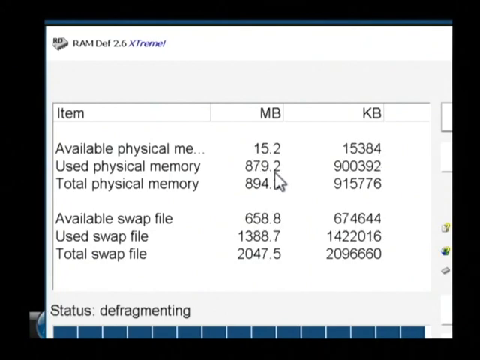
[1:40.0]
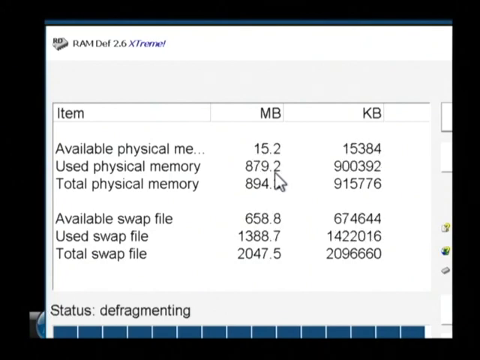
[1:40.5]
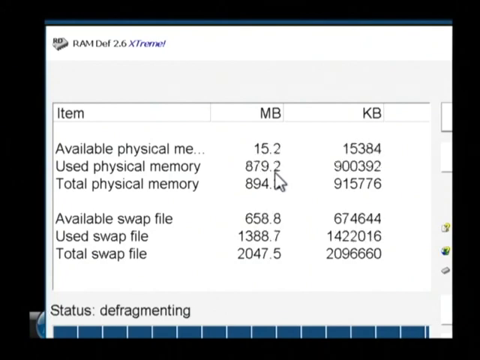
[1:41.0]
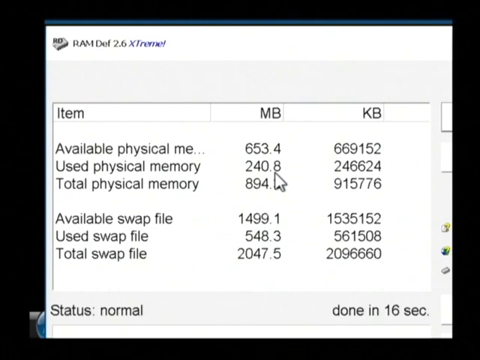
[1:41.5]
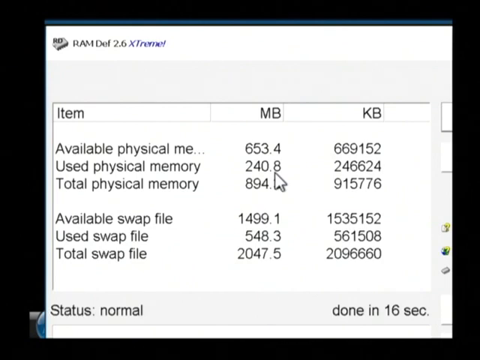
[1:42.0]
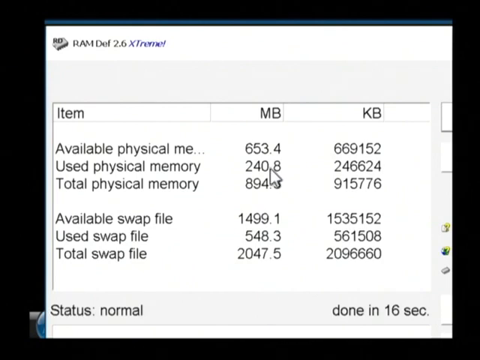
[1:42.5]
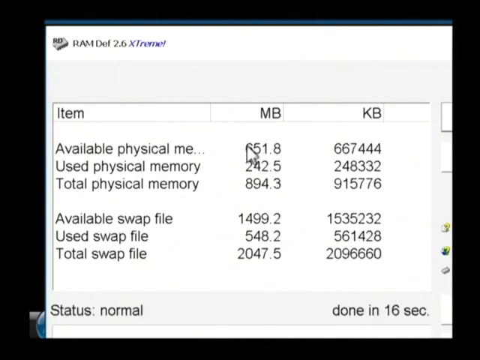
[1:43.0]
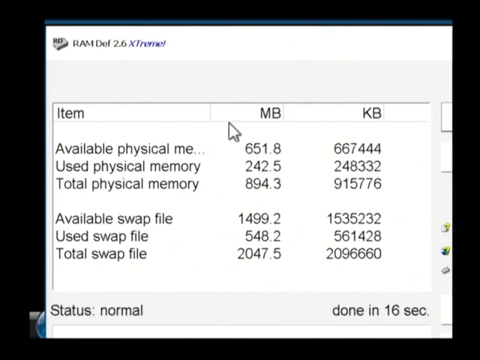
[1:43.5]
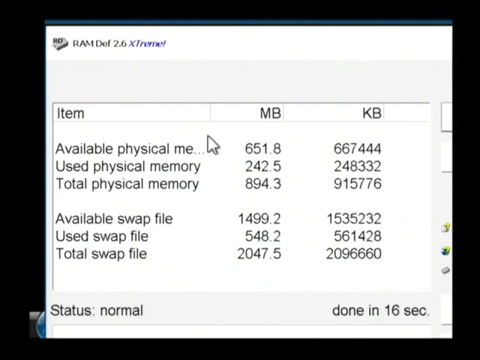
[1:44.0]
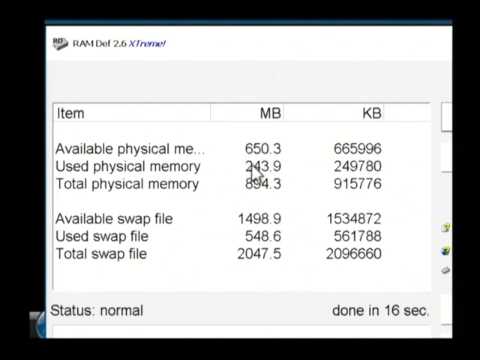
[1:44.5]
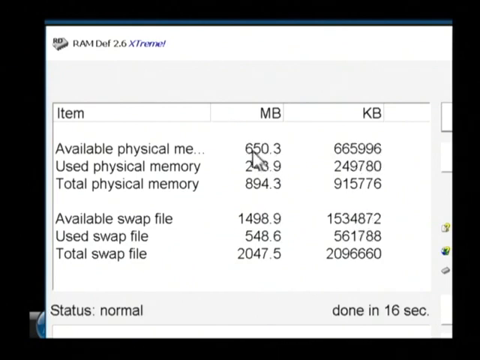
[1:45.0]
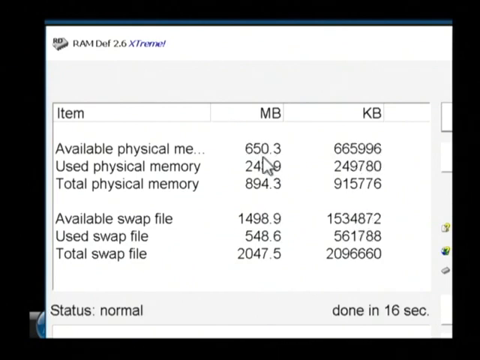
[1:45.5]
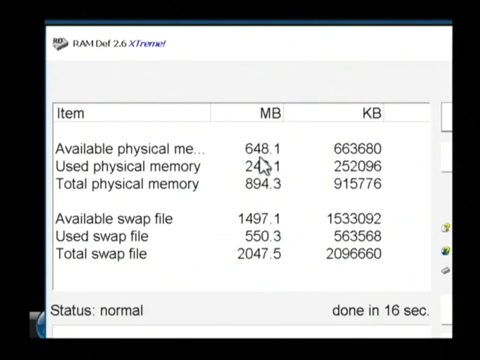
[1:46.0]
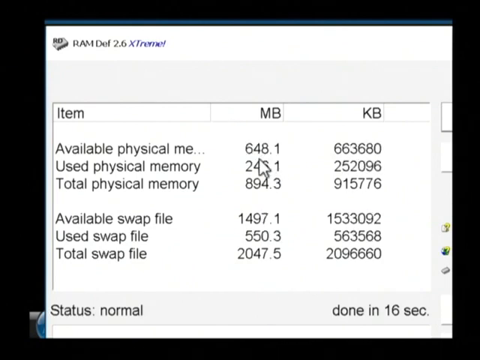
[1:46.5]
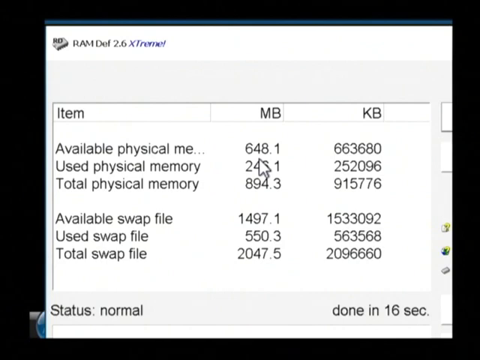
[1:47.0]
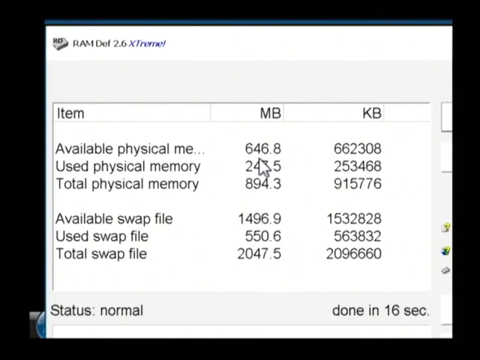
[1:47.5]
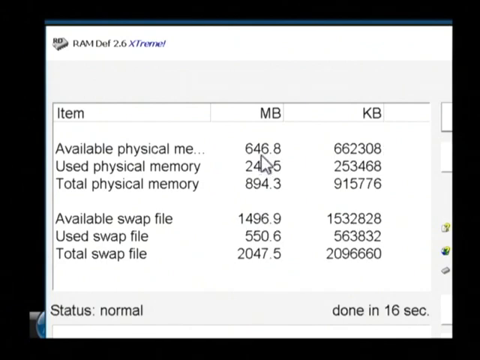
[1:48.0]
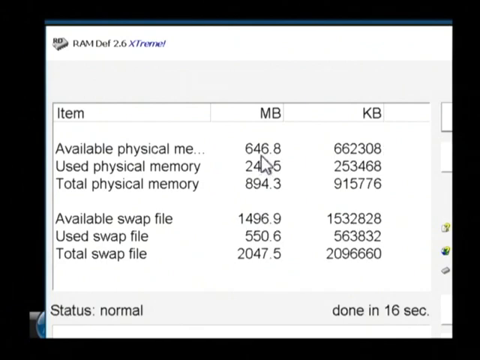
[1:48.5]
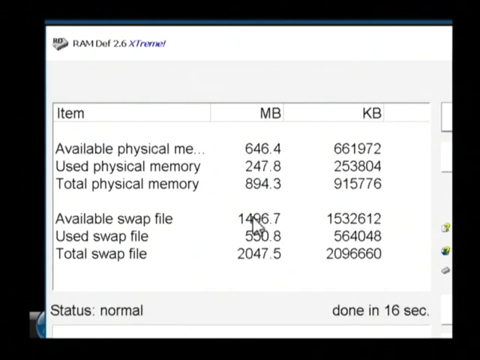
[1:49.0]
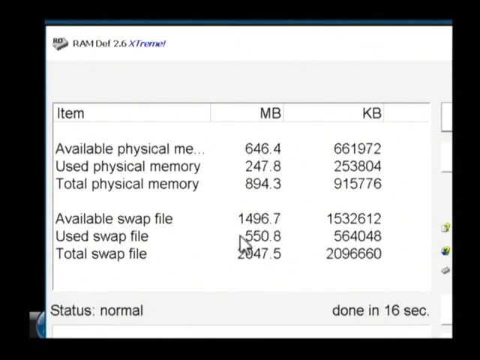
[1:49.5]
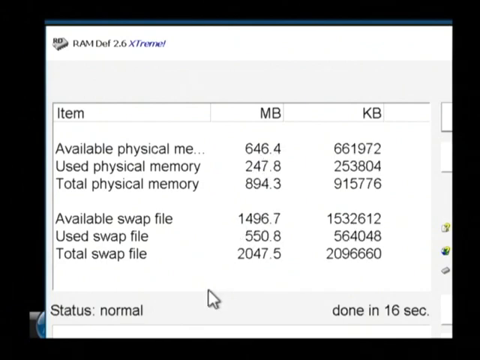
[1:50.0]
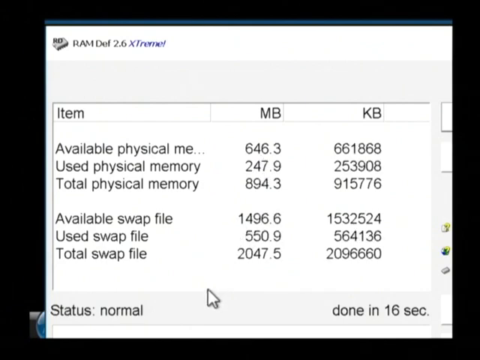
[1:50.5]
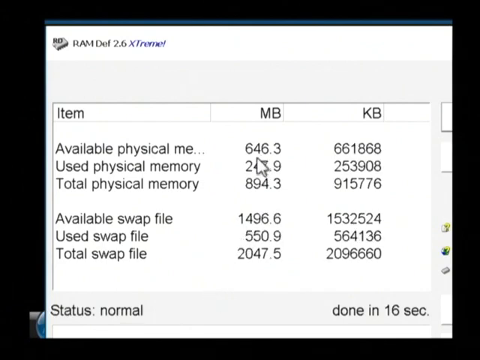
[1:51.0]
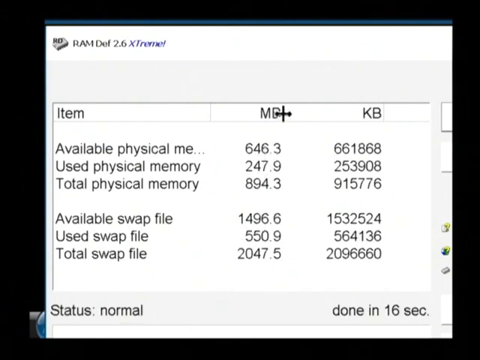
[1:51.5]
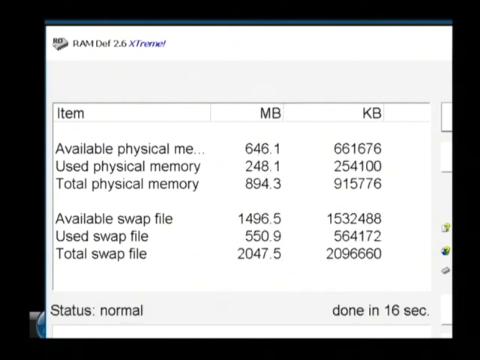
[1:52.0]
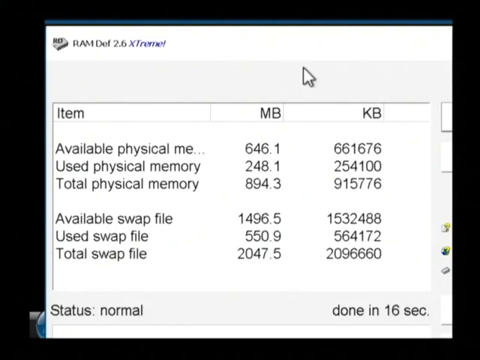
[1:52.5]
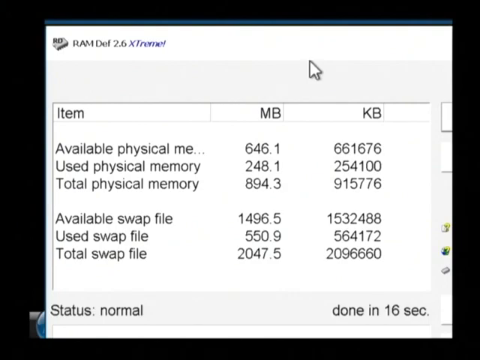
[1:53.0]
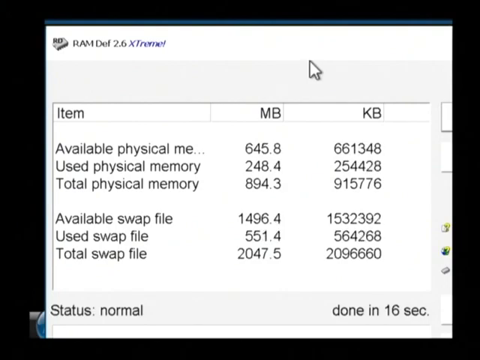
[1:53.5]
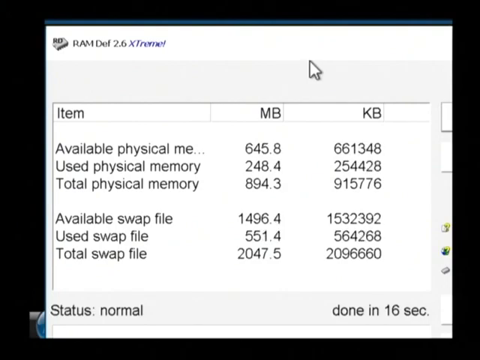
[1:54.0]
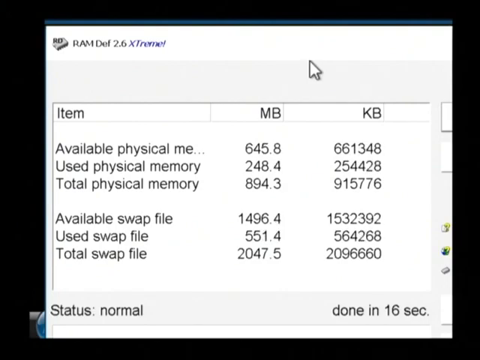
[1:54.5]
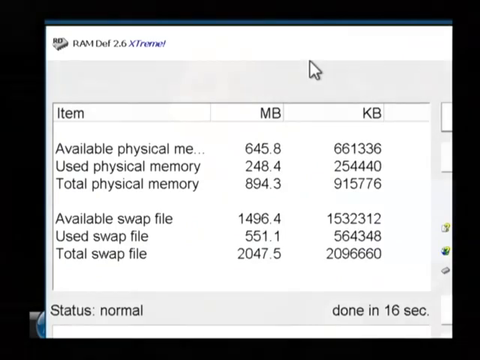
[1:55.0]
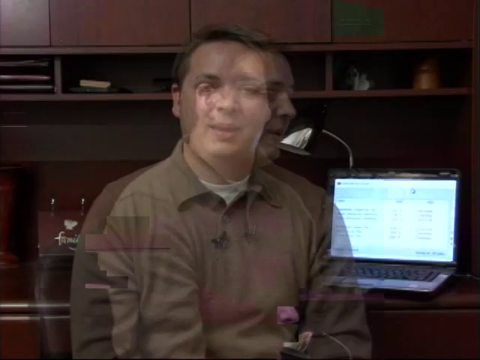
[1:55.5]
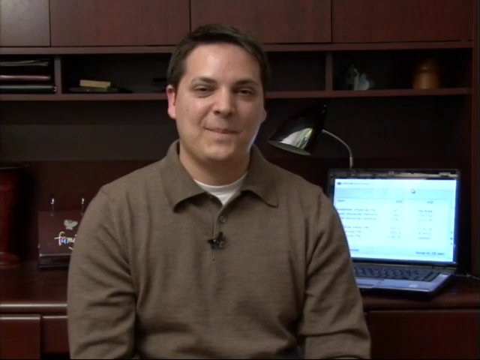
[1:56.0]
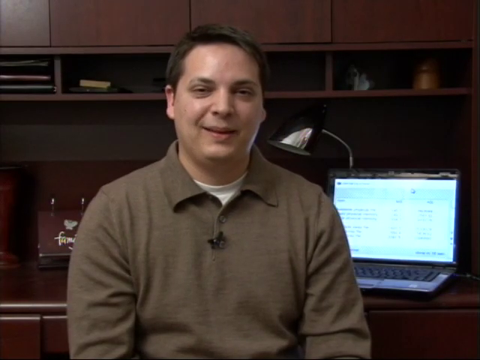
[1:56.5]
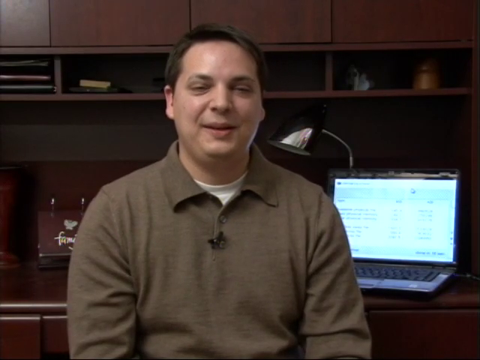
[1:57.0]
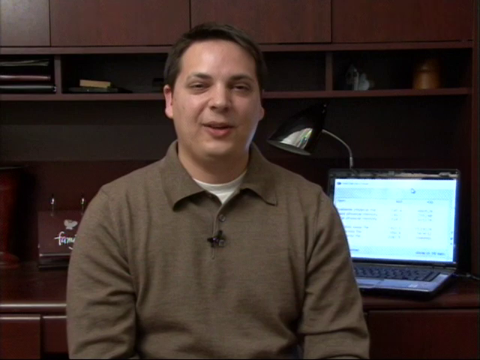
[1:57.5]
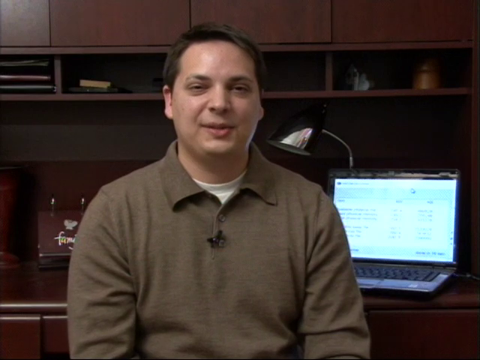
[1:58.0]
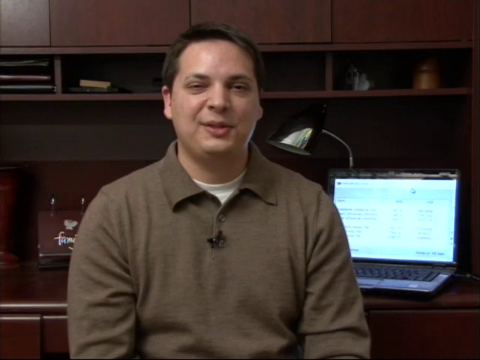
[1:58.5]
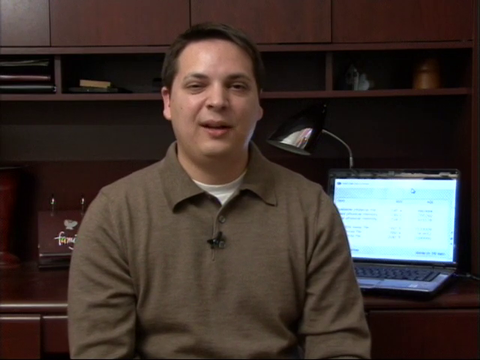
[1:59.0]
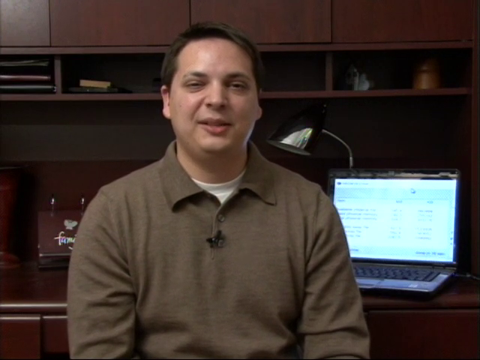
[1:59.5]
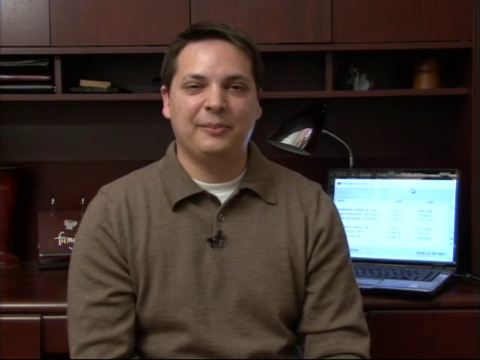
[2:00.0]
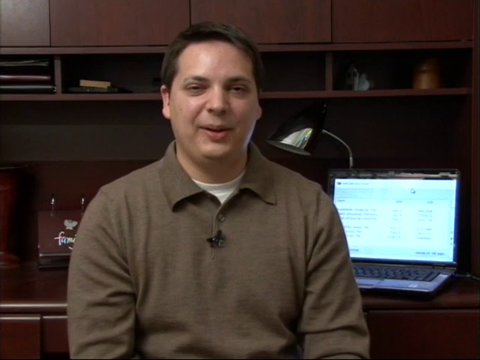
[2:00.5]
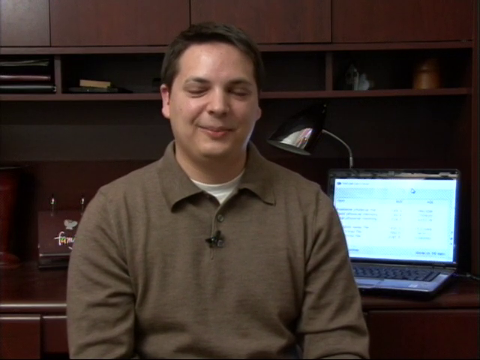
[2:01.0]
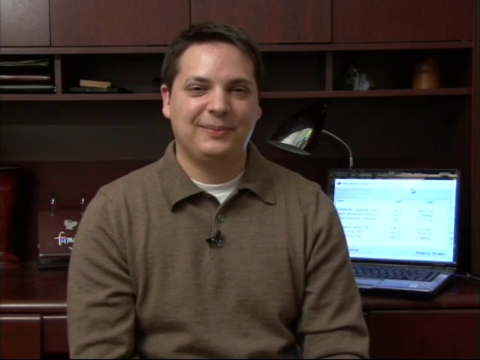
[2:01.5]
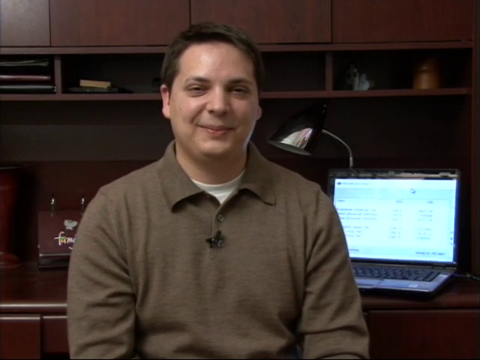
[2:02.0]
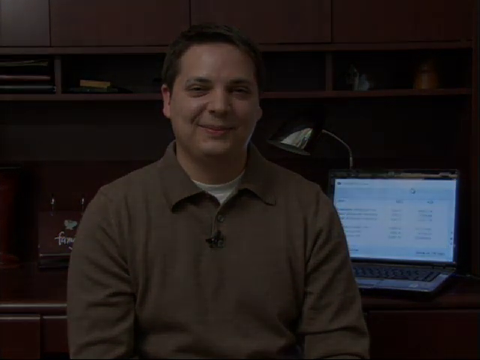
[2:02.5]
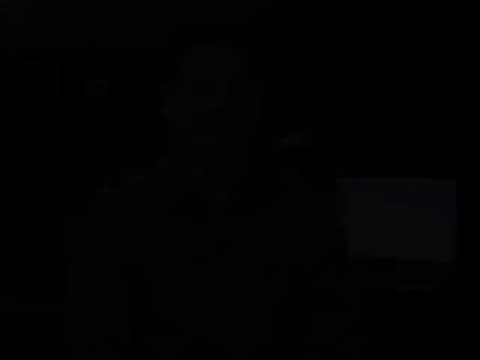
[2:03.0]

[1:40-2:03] The screen shows the items with their MBs and KBs: available physical memory, used physical memory, total physical memory, available swap file, used swap file and total swap file. The man then appears on camera, looking at it and talking, seemingly concluding and finishing what he was doing. He is smiling as he talks in front of the camera. Behind him, a laptop is on, showing what he was doing where he left it, and there is a brown cupboard with books and his laptop on it.